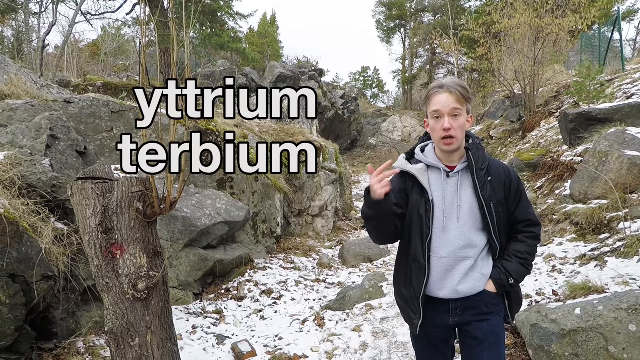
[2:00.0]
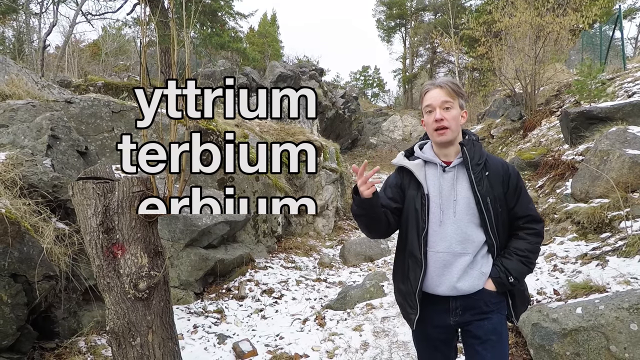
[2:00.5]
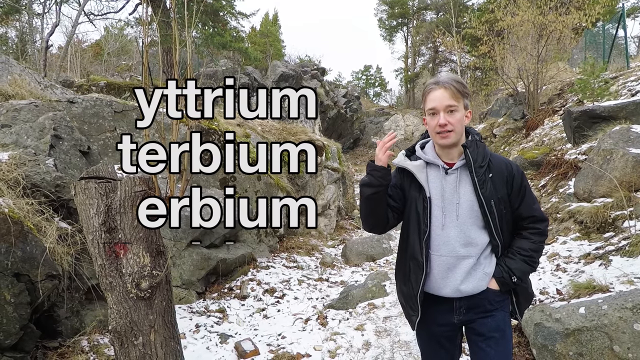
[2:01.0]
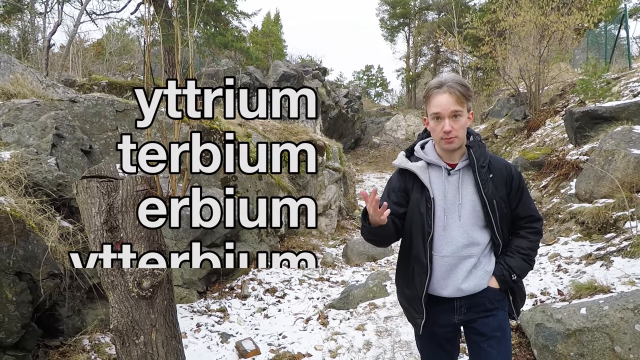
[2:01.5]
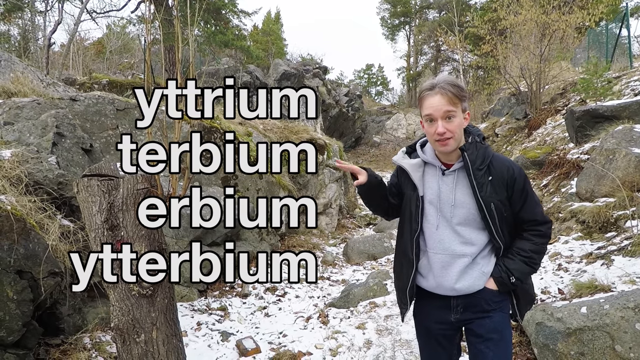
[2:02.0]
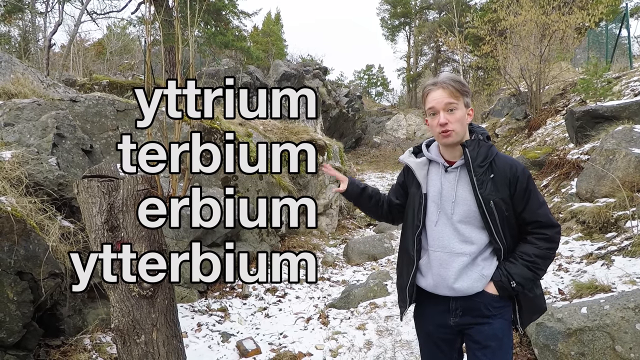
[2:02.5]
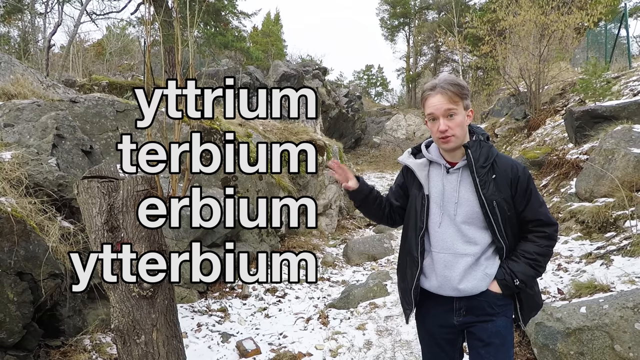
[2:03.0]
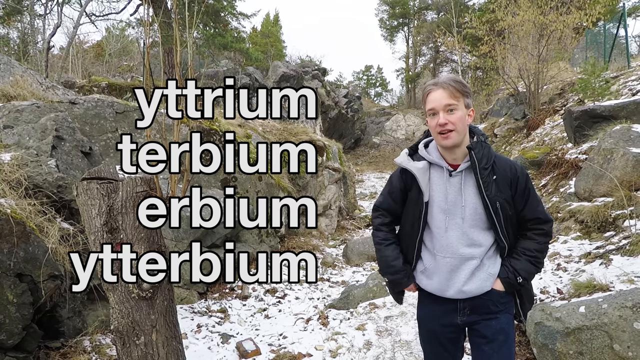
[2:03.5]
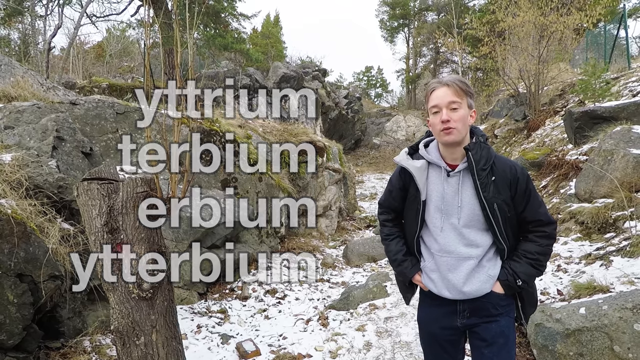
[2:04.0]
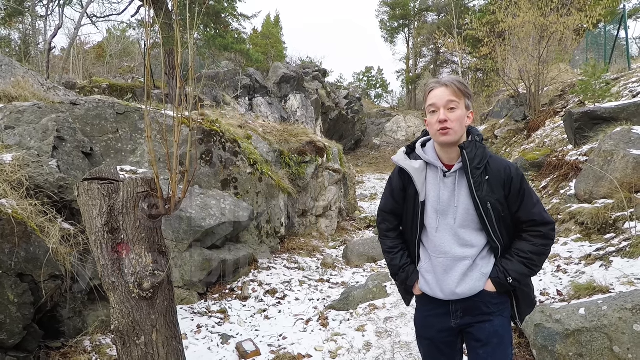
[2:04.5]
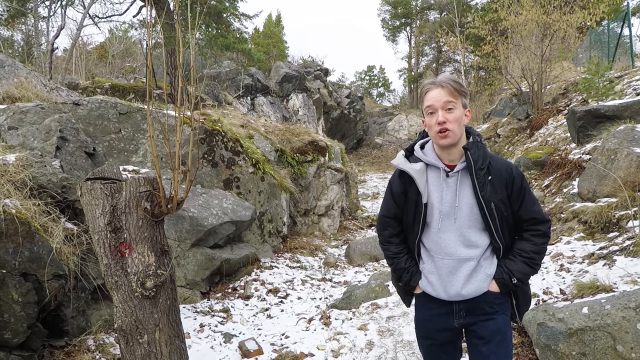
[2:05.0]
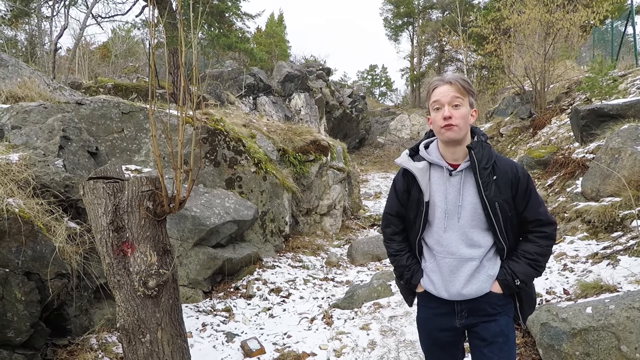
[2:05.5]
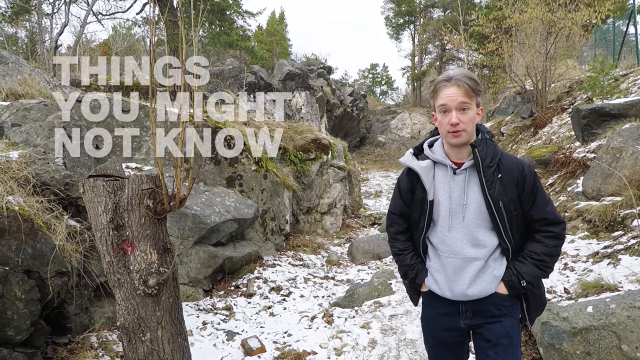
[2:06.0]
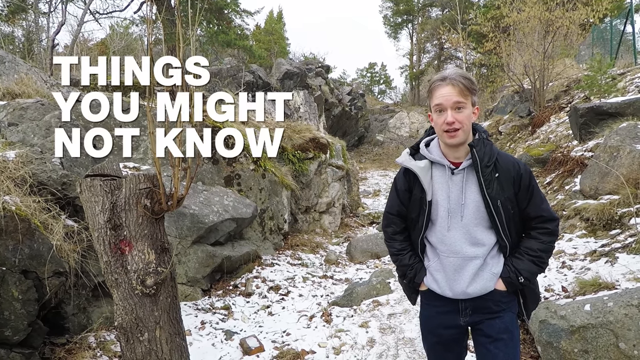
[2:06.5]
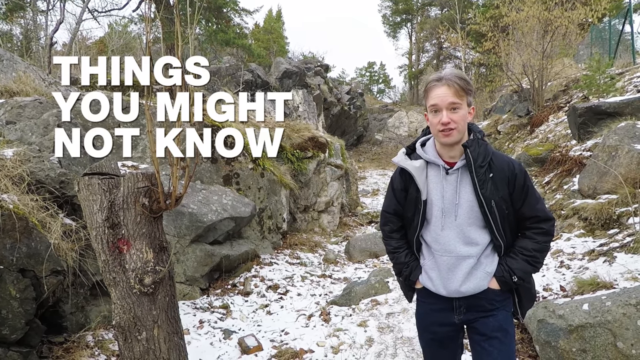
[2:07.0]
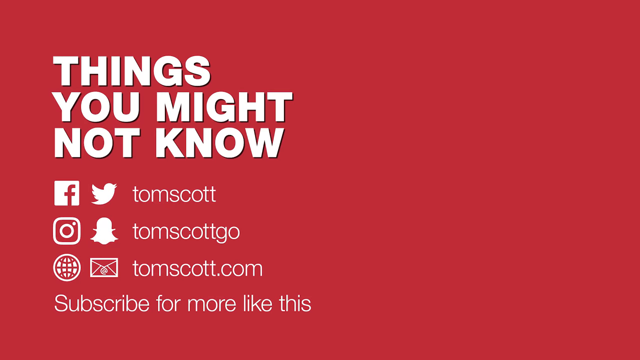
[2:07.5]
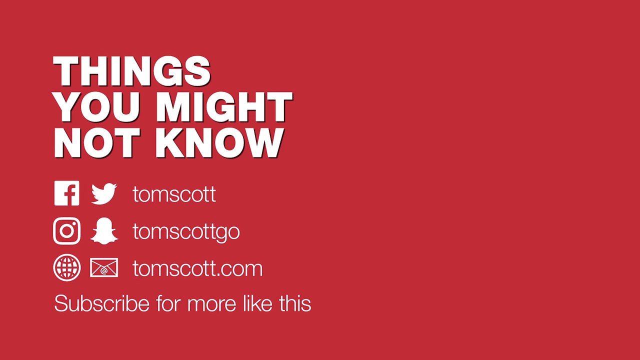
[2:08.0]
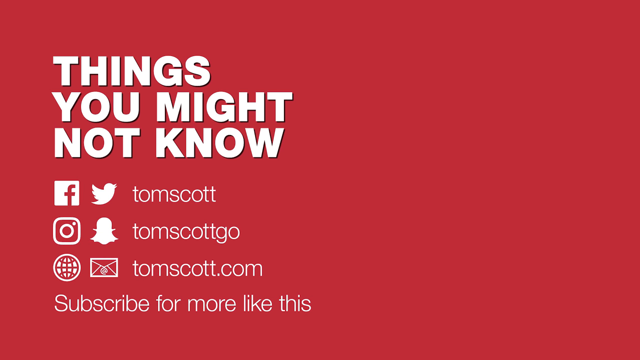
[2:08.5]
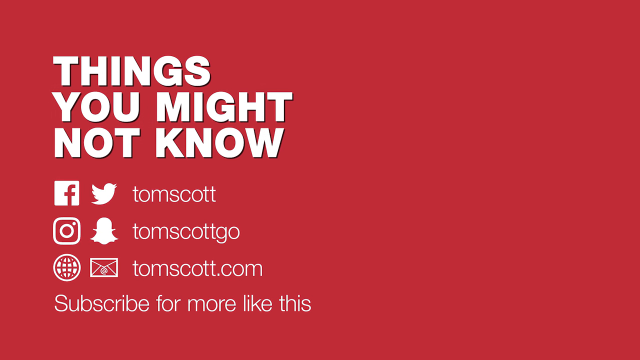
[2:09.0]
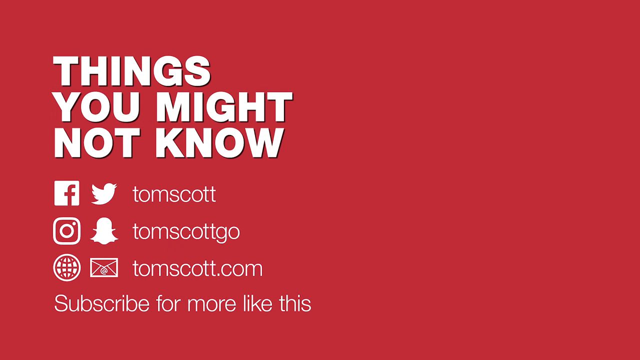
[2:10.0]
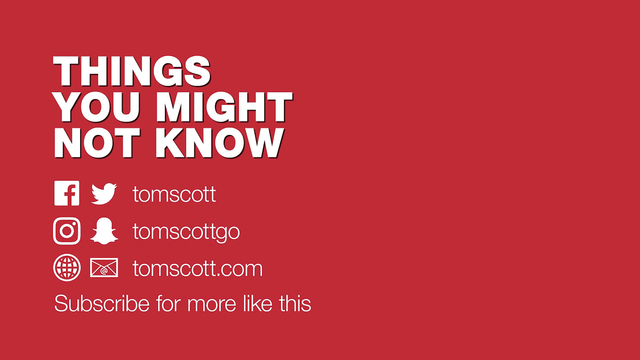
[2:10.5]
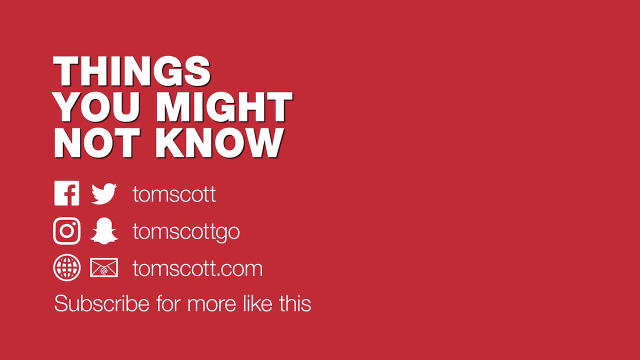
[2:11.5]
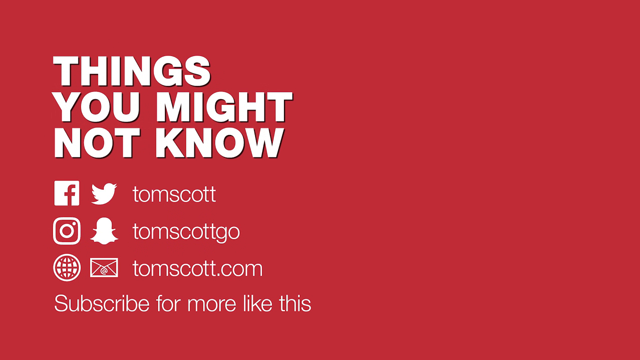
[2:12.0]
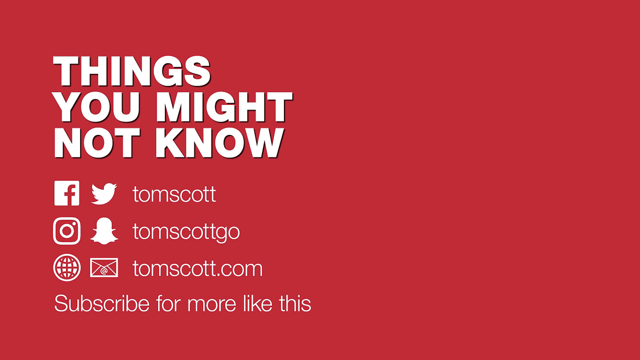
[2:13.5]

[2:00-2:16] The screen shows "Tom Scott, 6.53 million subscribers, One Town, Four Elements, Yitterbee, Things You Might Not Know, Yitribium, Teribium, Eribium, and Yirtubium", apparently four elements possibly discovered there, all ending in "ium". This part is very brief. The rocks and trees in the background are shown, and the area looks very untouched.